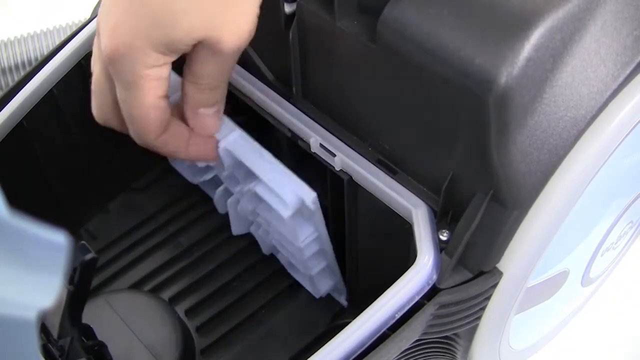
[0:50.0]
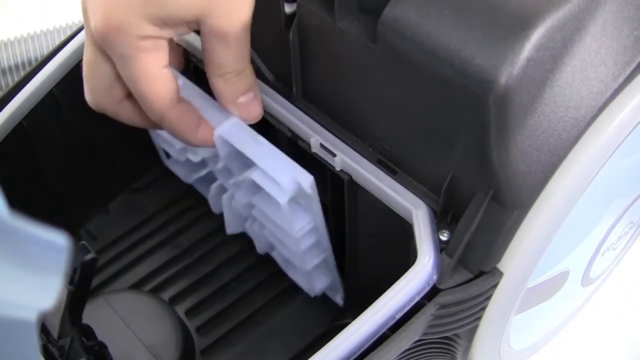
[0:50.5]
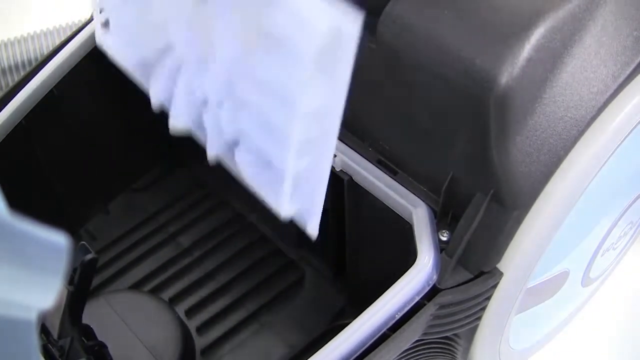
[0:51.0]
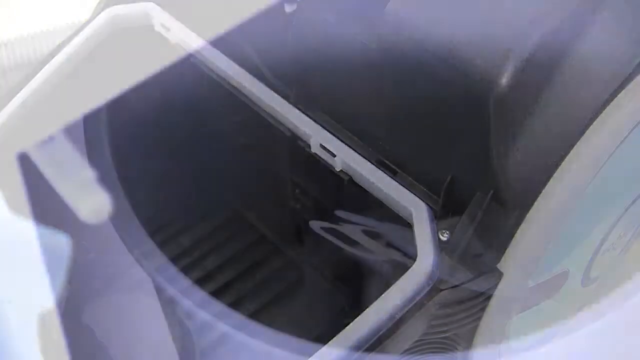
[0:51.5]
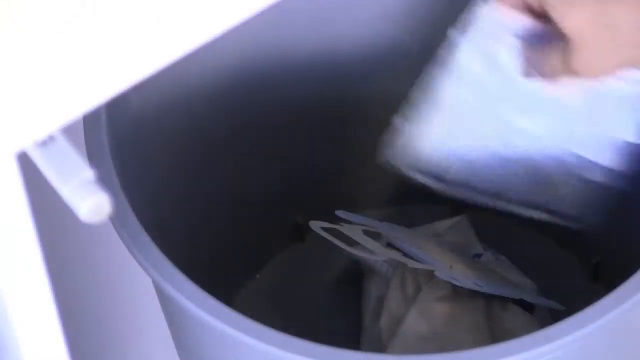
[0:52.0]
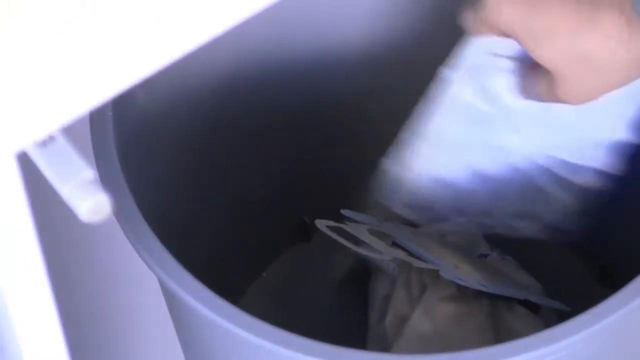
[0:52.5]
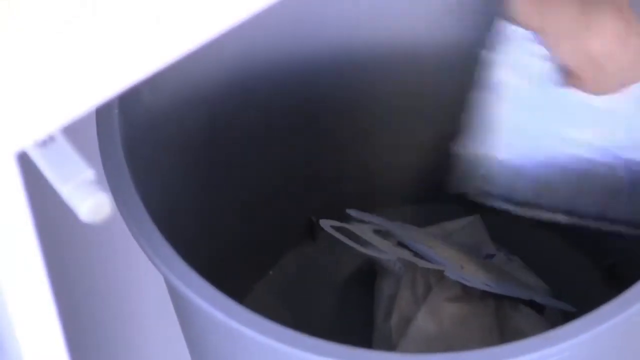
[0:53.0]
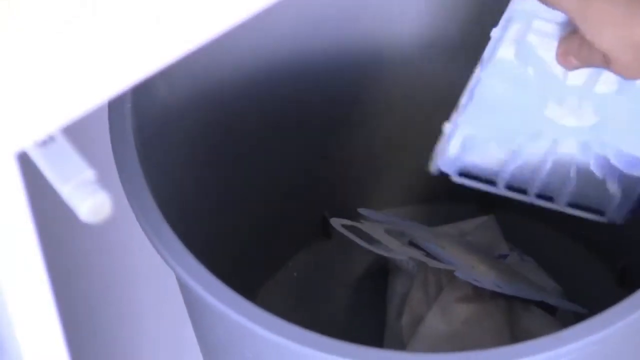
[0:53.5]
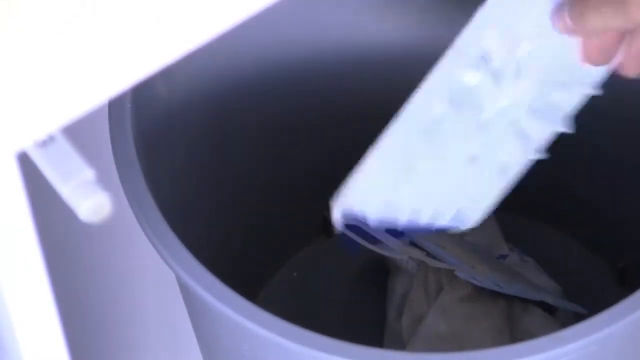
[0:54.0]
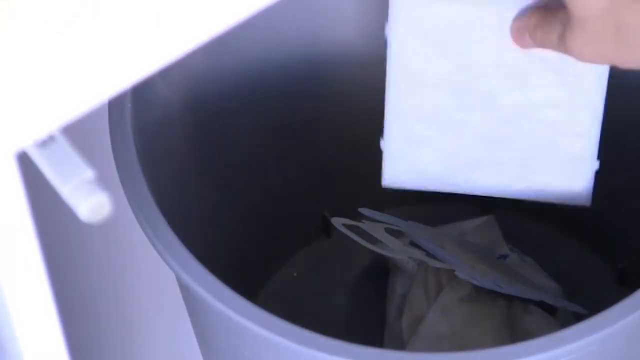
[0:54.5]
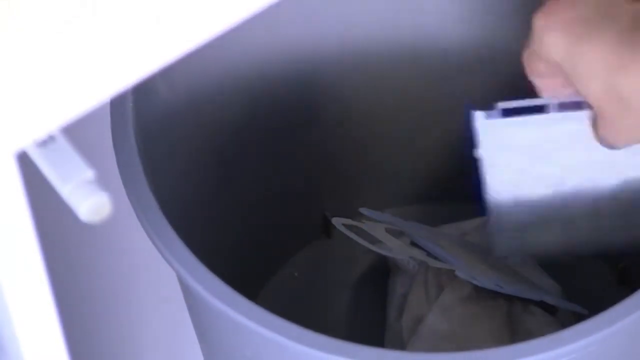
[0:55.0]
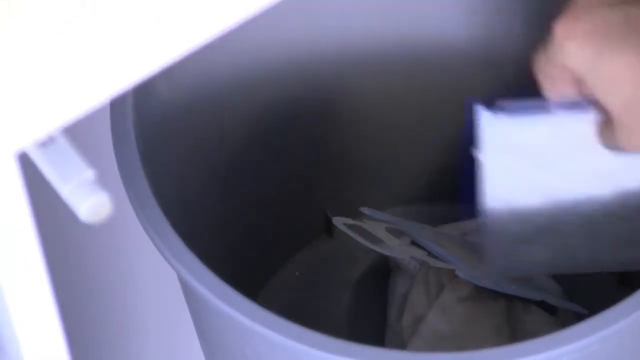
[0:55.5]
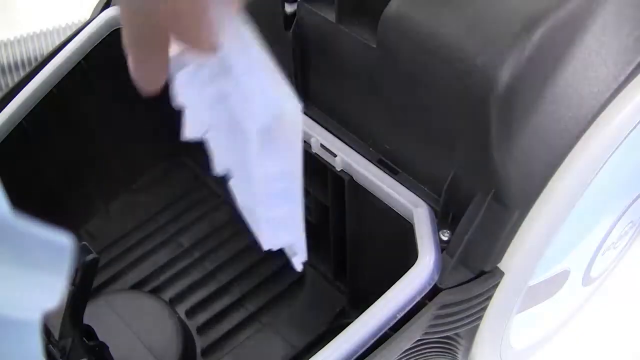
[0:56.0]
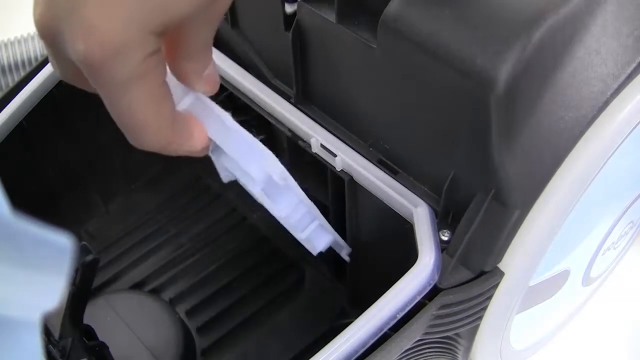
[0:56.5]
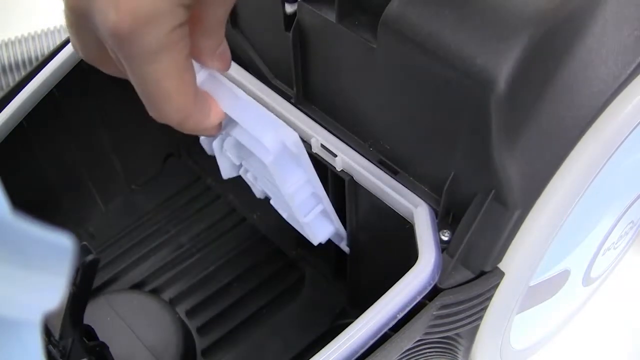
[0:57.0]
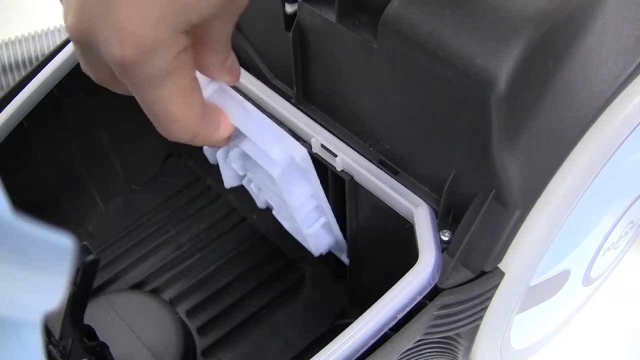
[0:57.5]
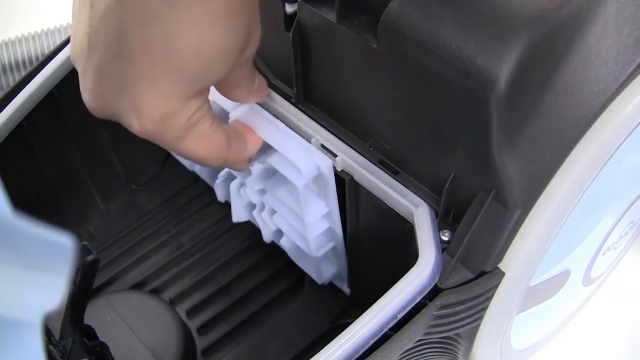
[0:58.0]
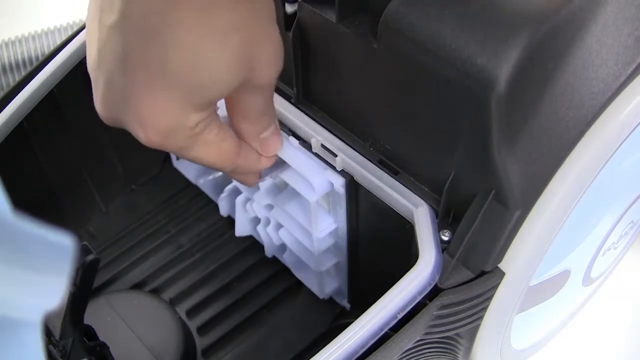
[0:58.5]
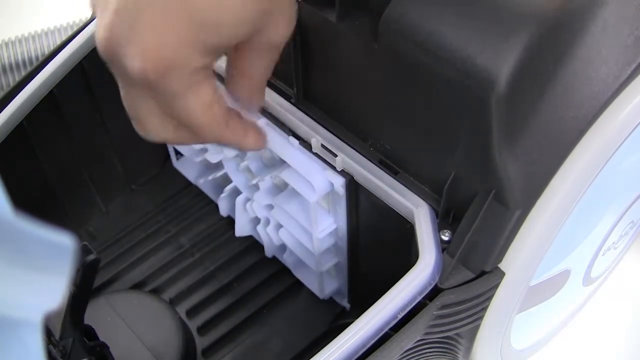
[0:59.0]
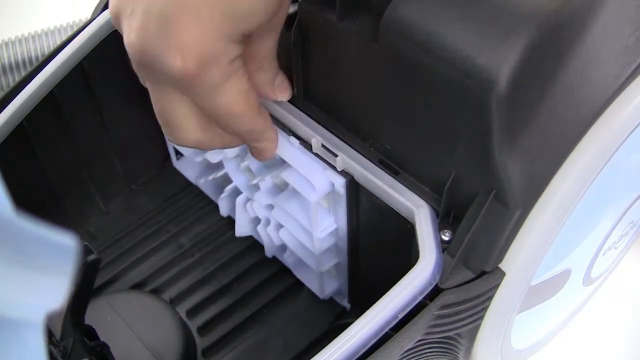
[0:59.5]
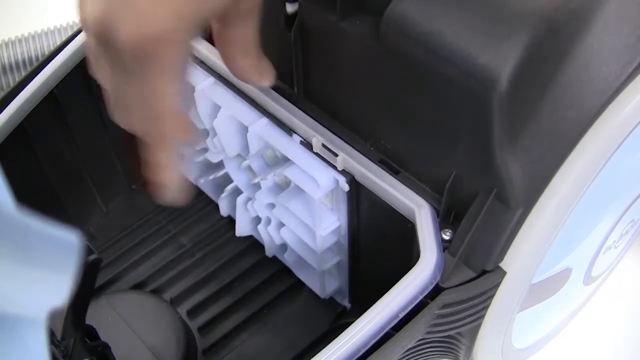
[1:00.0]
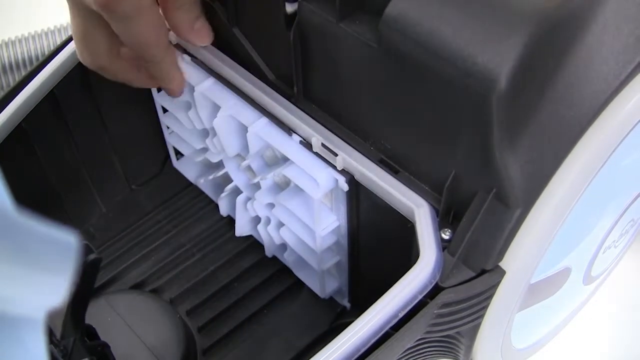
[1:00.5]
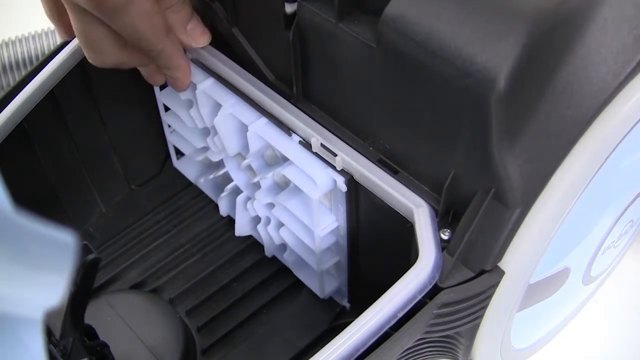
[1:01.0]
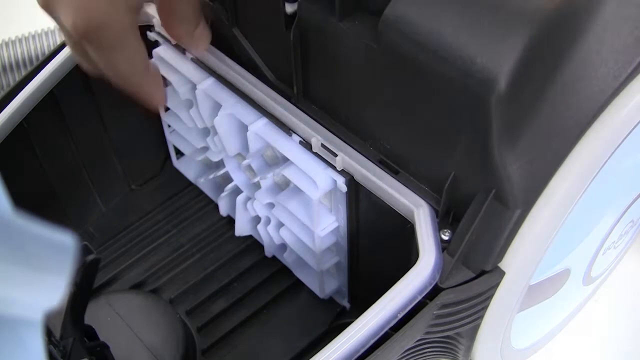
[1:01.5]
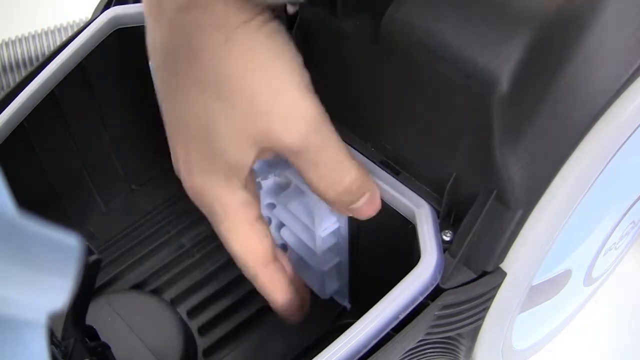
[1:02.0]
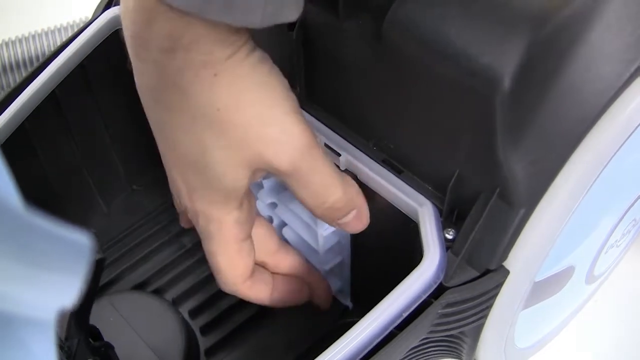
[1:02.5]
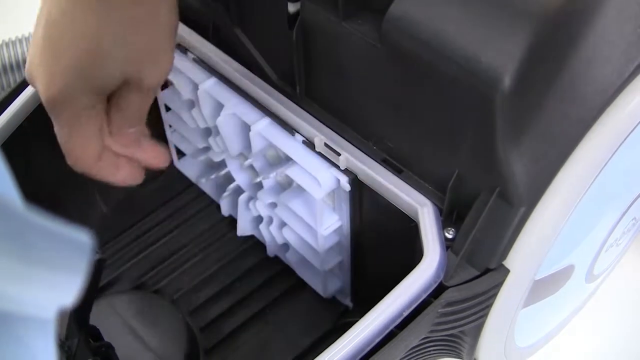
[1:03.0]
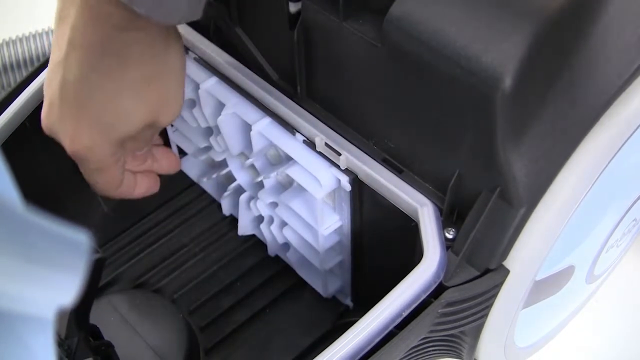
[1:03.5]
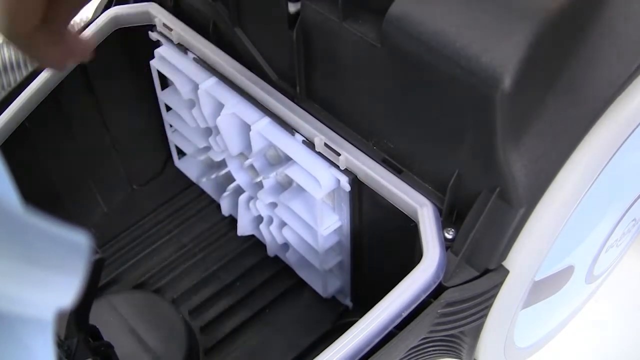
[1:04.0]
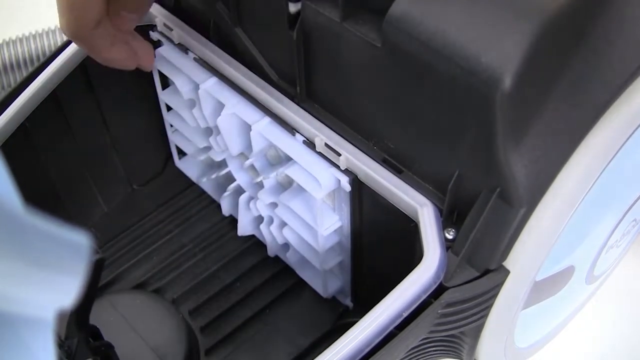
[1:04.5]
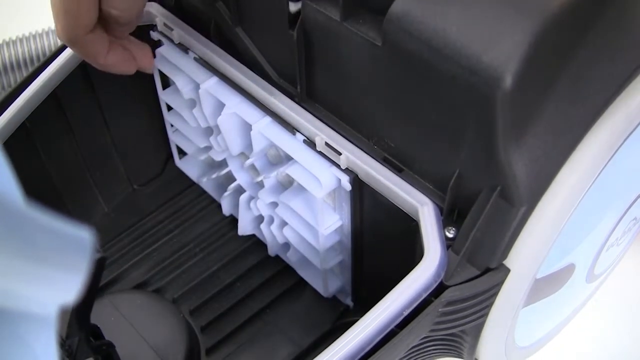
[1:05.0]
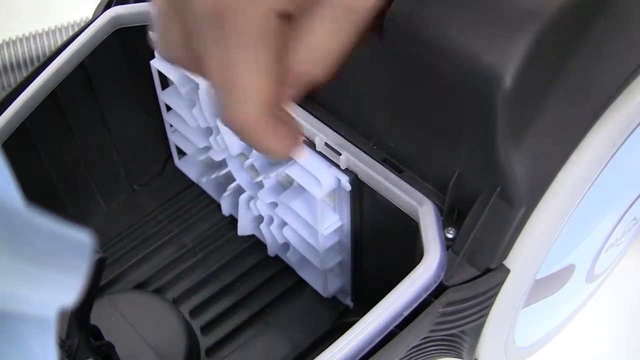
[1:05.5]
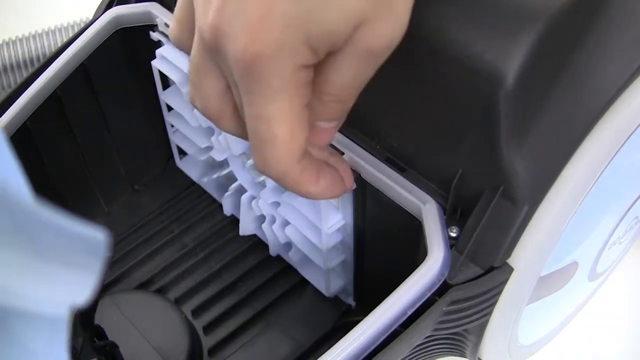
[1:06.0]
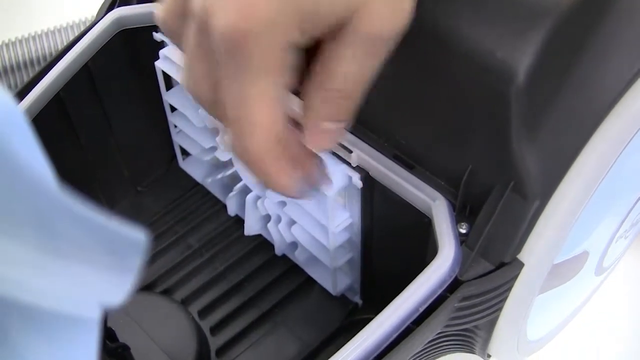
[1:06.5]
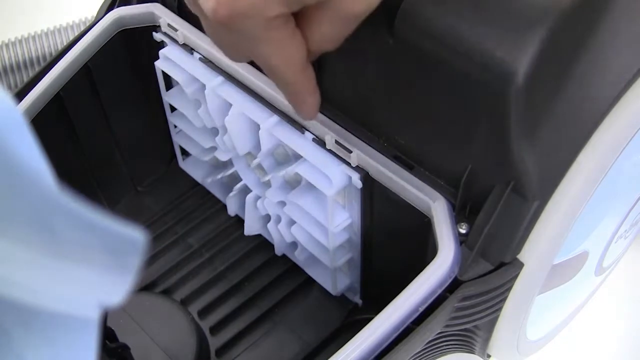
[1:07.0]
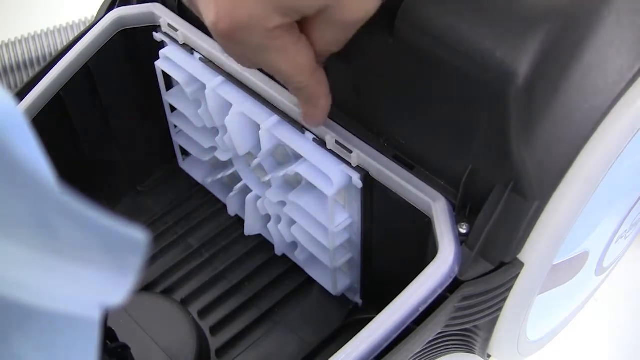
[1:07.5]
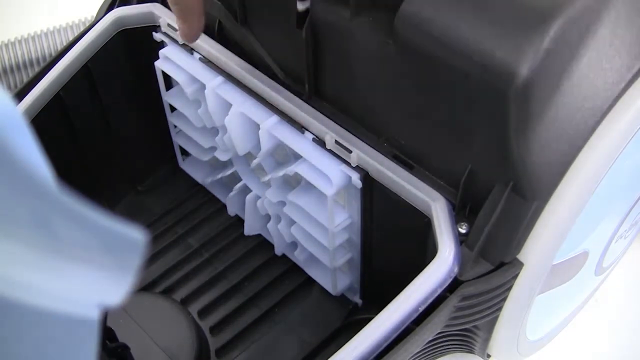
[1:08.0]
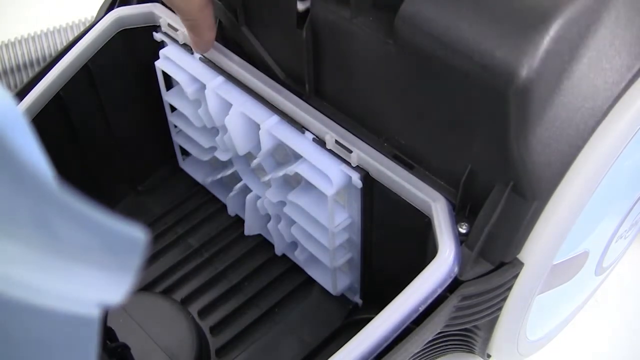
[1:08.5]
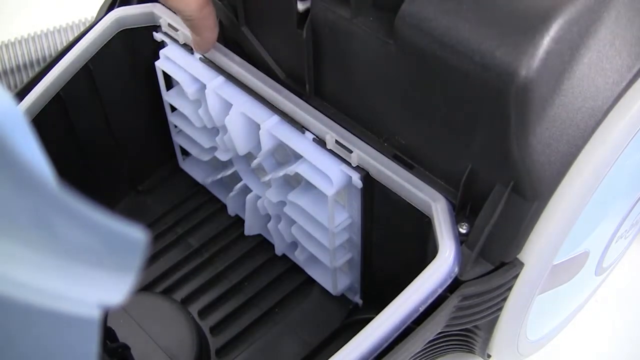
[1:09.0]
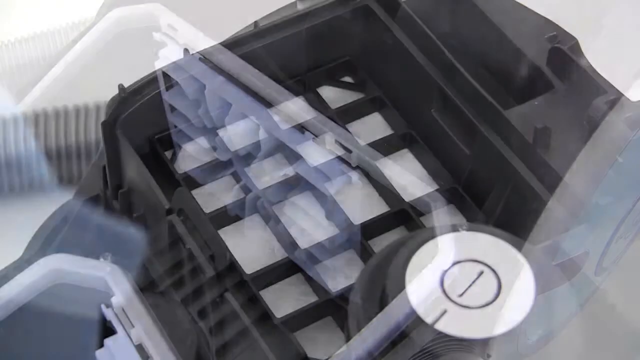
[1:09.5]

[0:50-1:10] A beige hand is positioned inside one of the parts of the vacuum and grabs a white item that was placed at the side of the inner portion; the white item resembles some sort of maze. The hand removes it, and the scene transitions to the hand holding the white item, which looks similar to a plate, and tapping it against the rim of a round object, possibly to remove particles or dust. In the next scene, the hand, still carrying the same white object, places it back into the blank slot it was taken from and clicks it onto the side of the product, making sure it is secure in place.